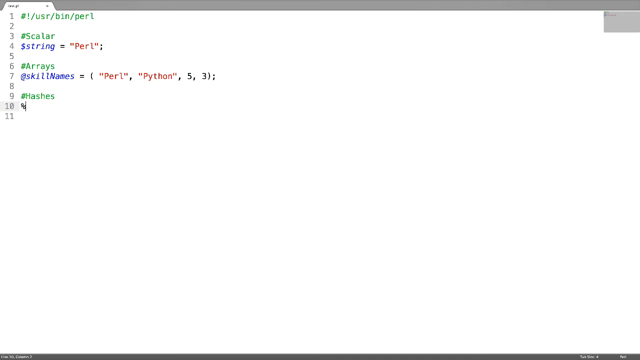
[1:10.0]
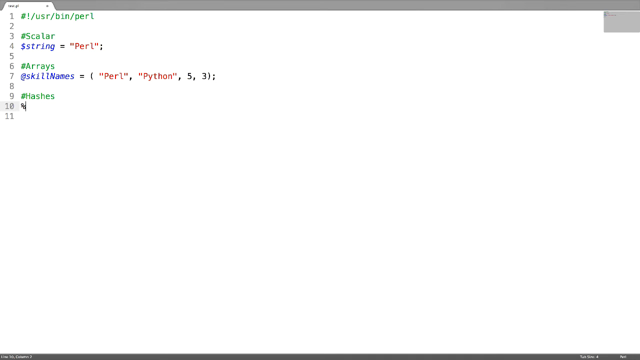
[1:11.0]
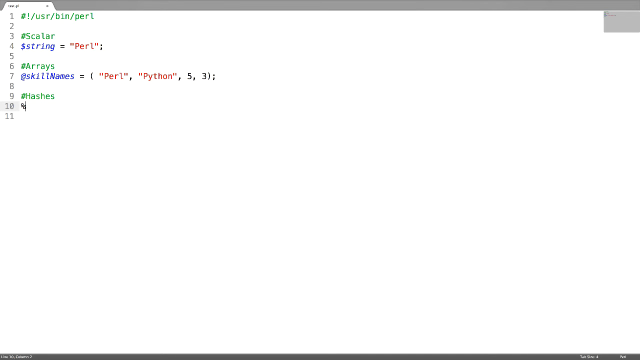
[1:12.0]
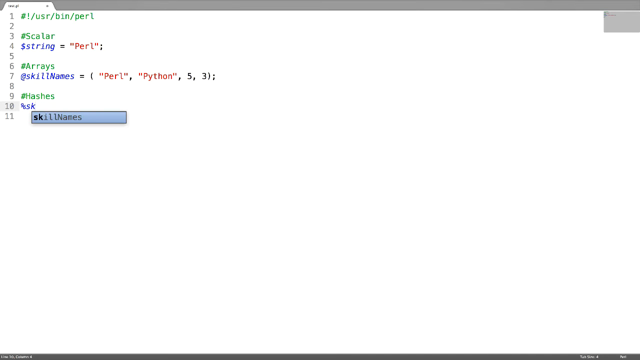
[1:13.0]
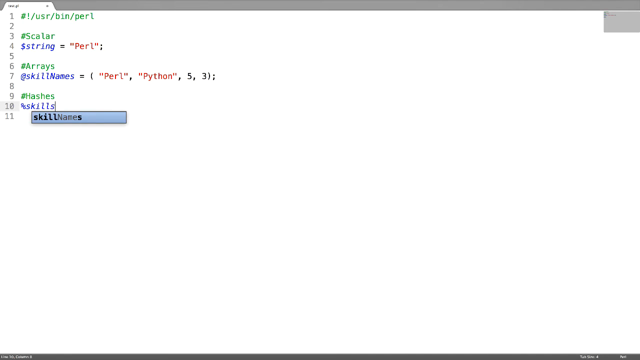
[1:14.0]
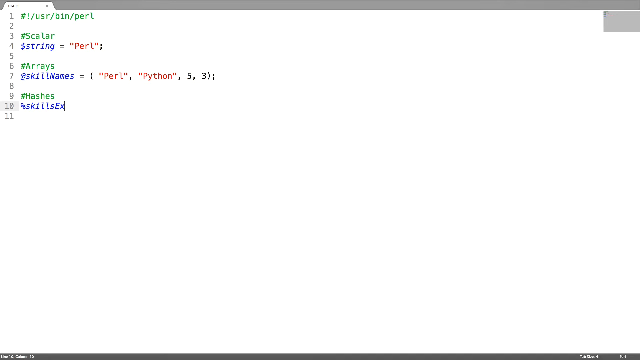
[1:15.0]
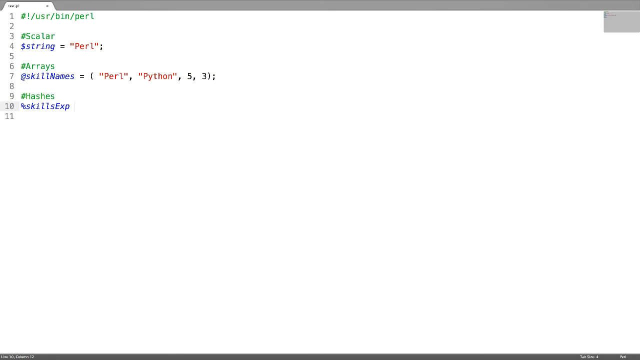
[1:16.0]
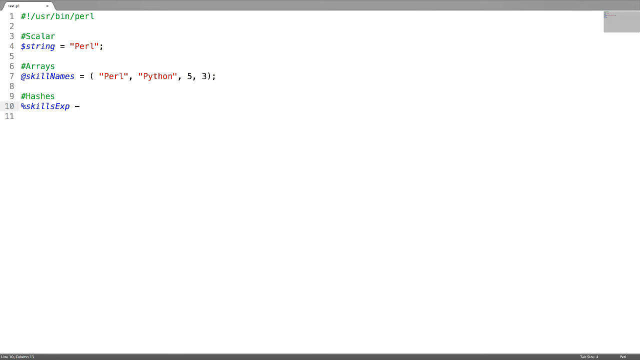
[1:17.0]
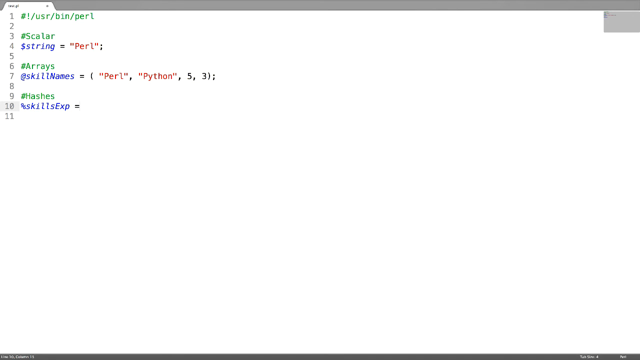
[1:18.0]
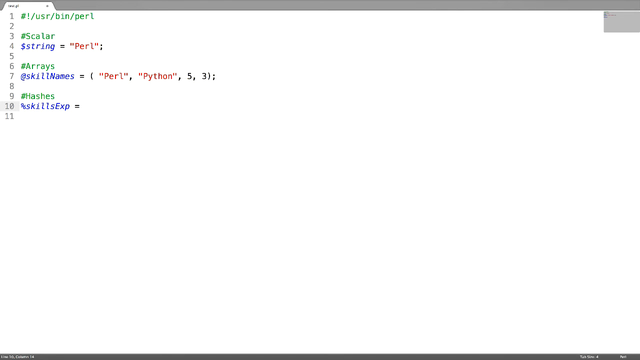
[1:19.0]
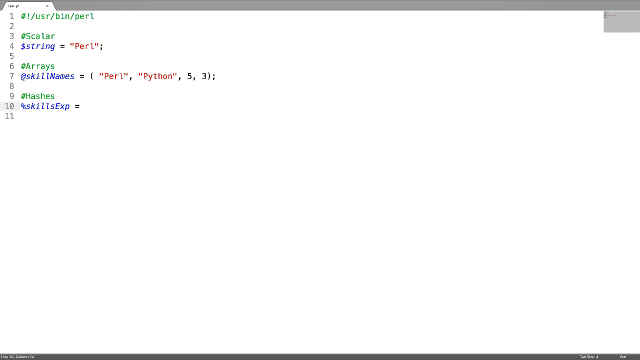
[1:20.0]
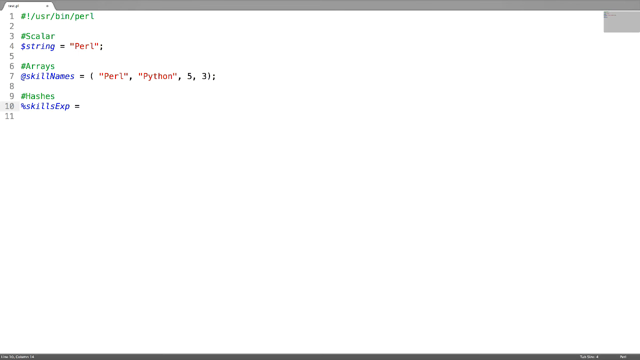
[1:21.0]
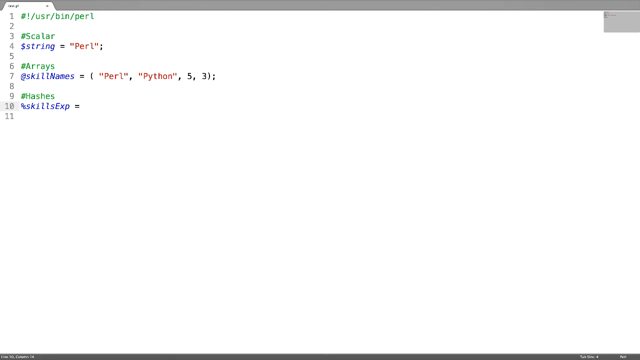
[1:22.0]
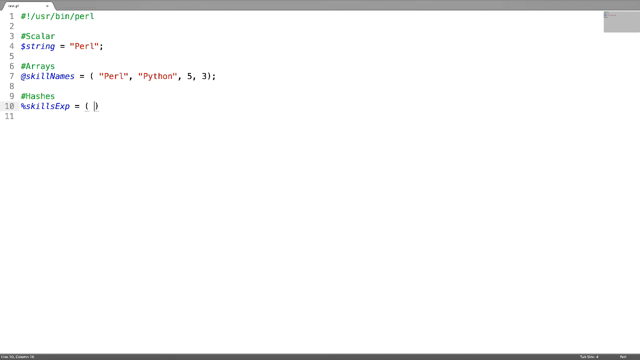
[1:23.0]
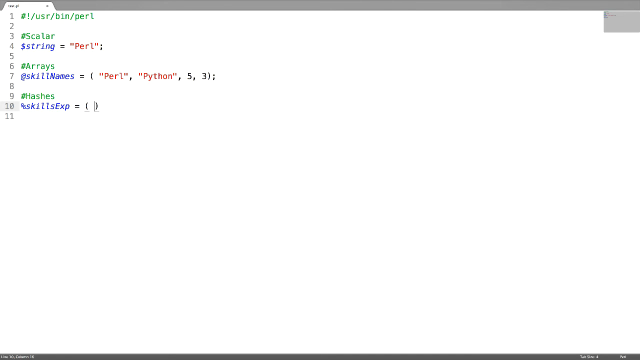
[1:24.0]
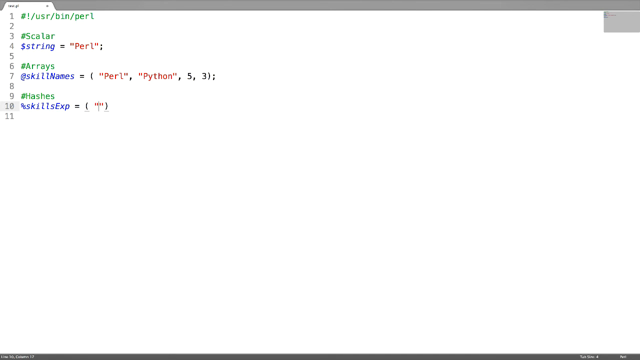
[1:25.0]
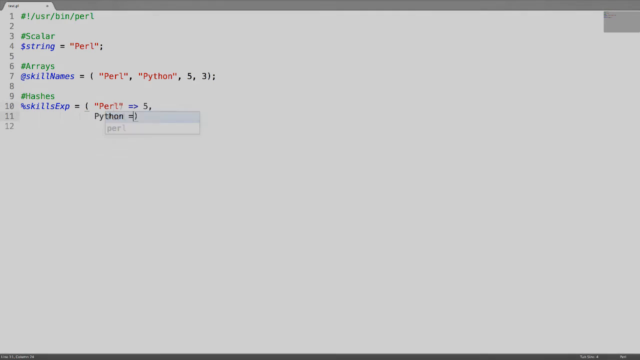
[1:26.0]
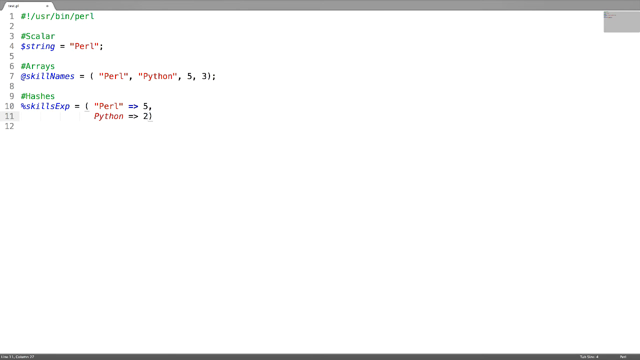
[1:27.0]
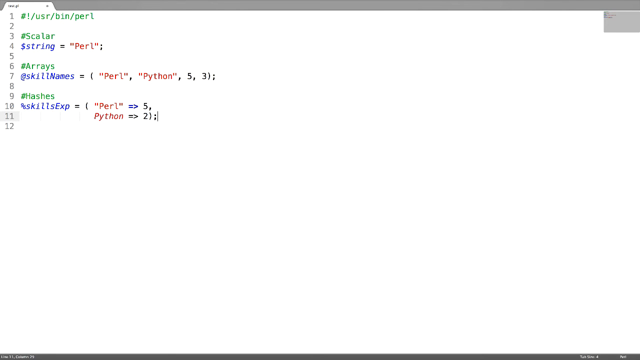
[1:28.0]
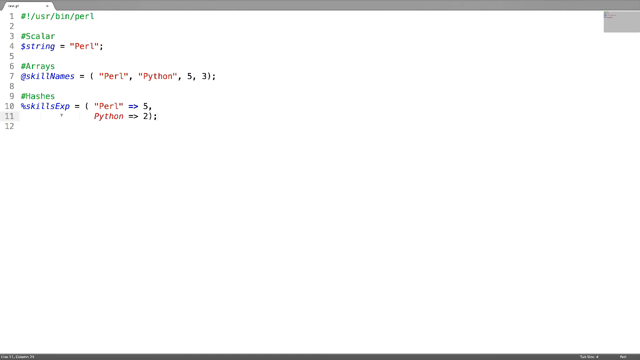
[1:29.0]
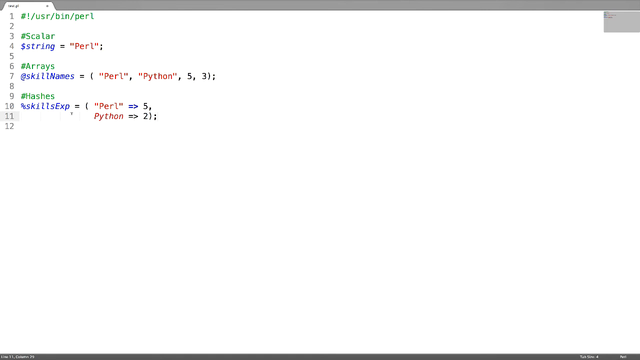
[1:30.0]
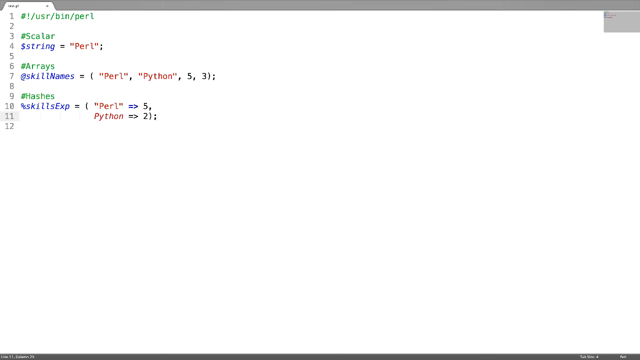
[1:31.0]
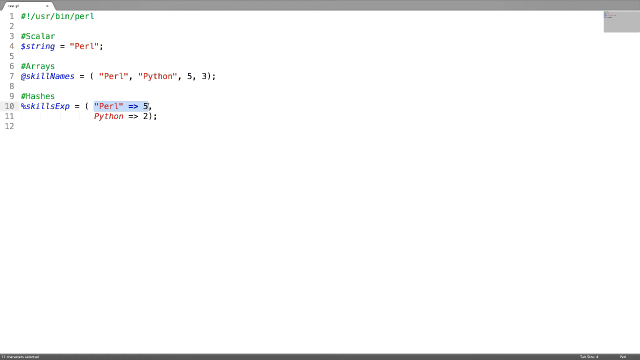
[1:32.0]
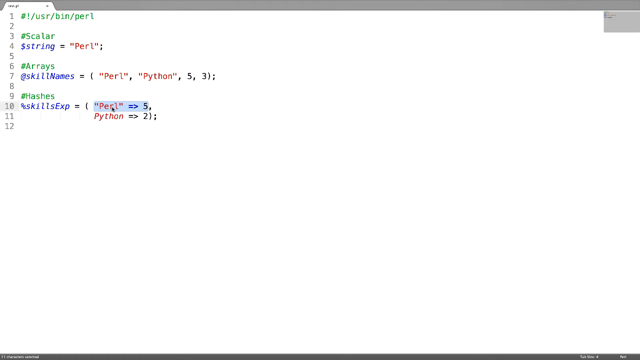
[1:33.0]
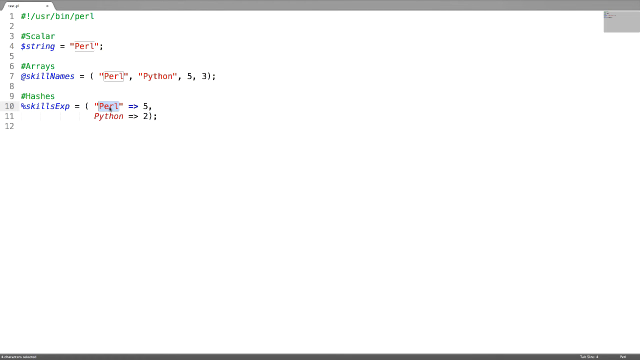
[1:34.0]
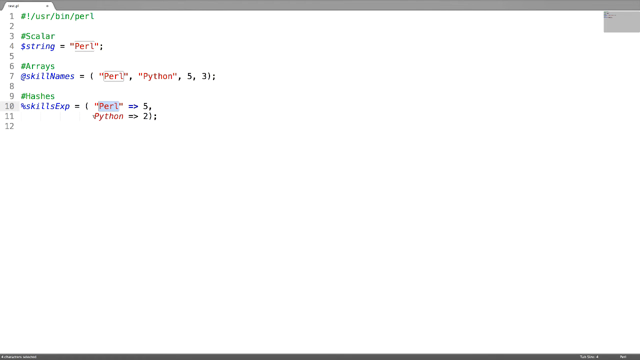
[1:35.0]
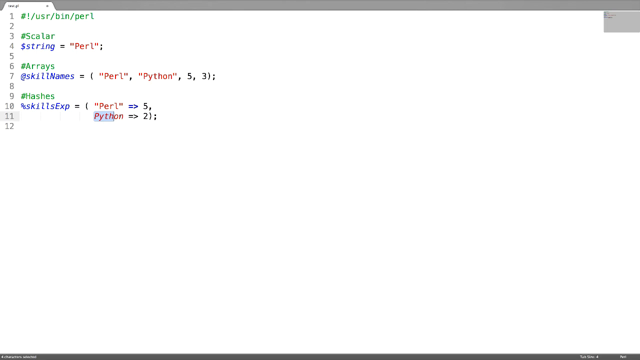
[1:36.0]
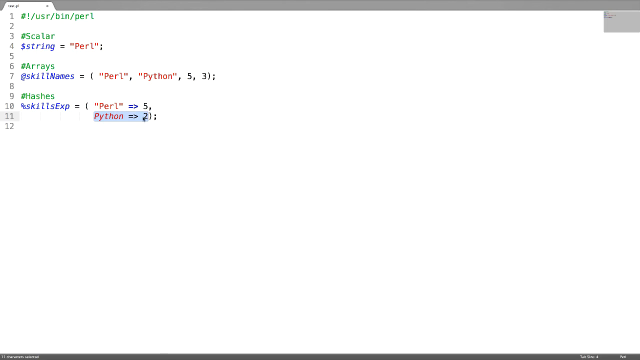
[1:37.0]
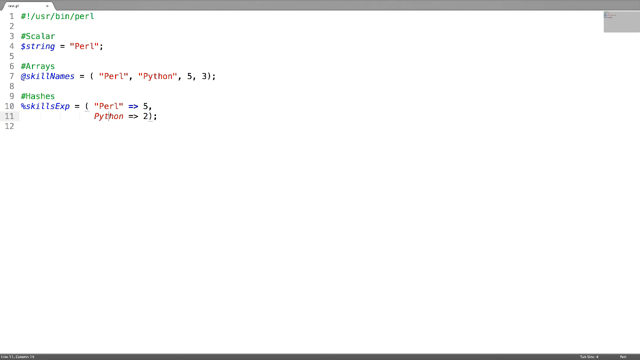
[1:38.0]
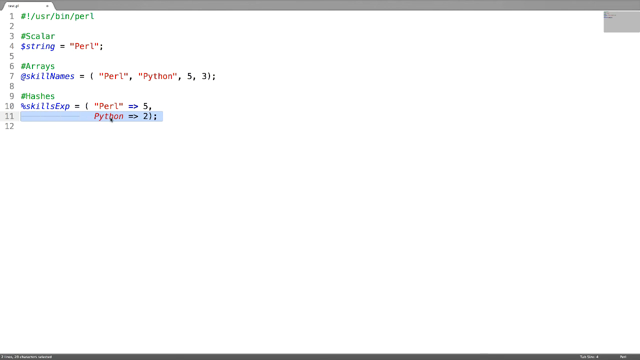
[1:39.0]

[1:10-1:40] A line shows # skills x set equal to brackets containing peril, python and five, with peril equal to five and python equal to two. Peril is highlighted, then python equal to two is highlighted on line 11, and it is removed. The code shows the dollar sign with string equal to peril, the array with x and scale name equal to peril, python and five, three, and the hash with the percentage sign. The person then starts removing, copying and highlighting other hashes.